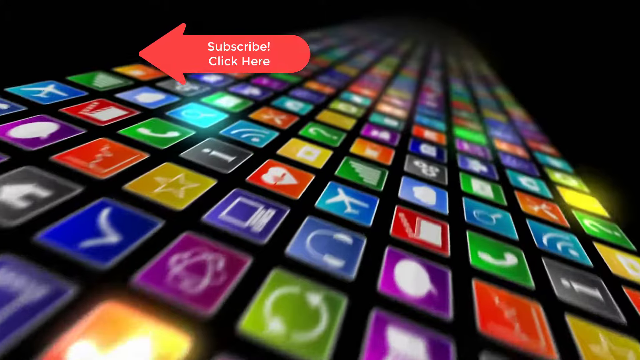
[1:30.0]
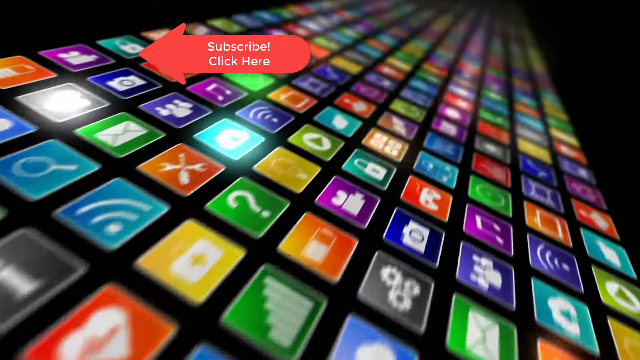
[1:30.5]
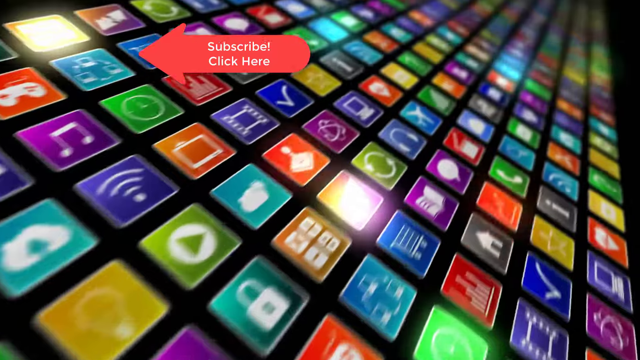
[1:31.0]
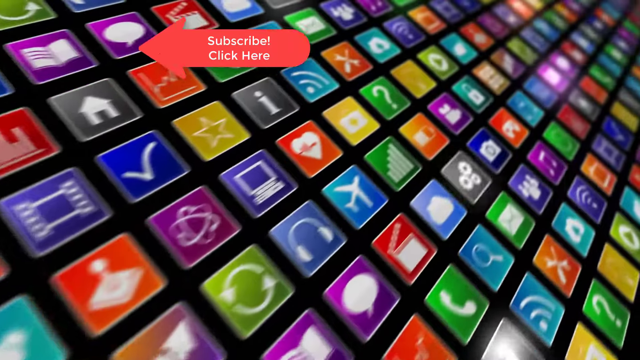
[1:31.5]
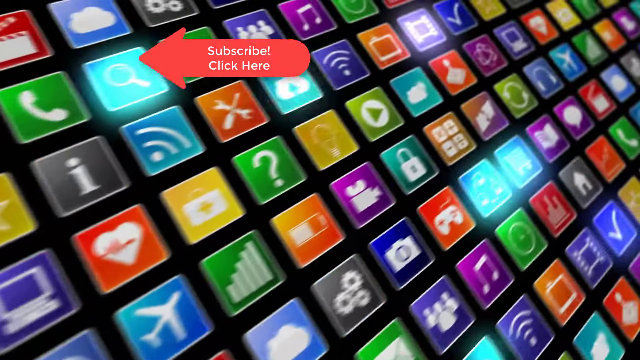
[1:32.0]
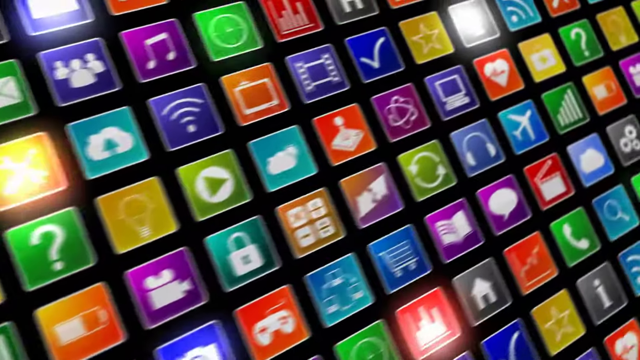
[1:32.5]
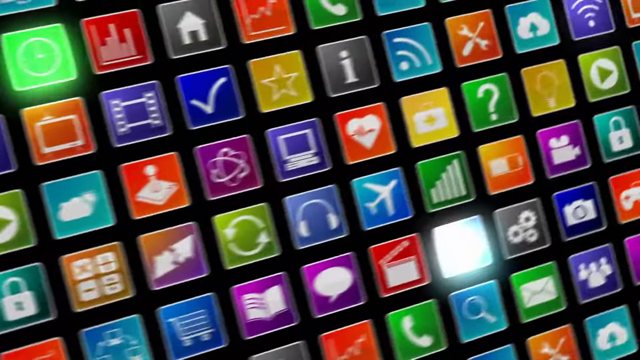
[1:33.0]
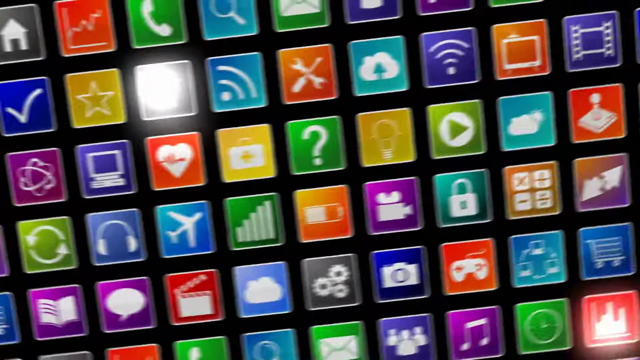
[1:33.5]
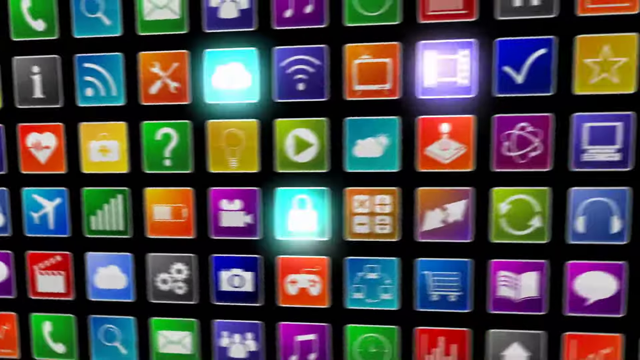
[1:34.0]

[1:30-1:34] The view scrolls past a graphical image of what appear to be app symbols, some of which are flashing. They include ticked aircraft symbols, an "i" for information, hearts, magnifying glasses, telephones, internet symbols, frequency signs, play buttons, cameras, musical notes, cogs, and a screwdriver and spanner. The video ends on a computer monitor, a joystick and a star.